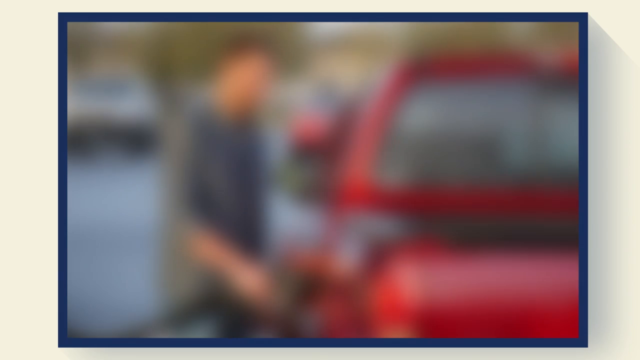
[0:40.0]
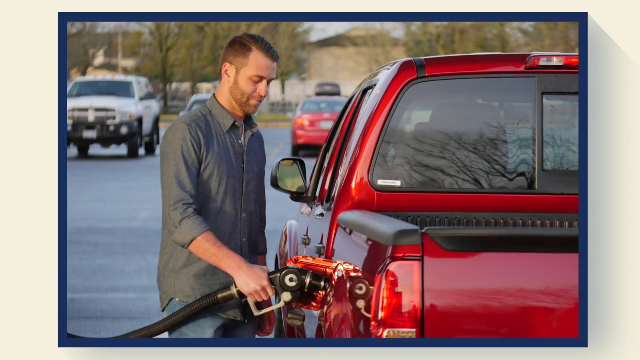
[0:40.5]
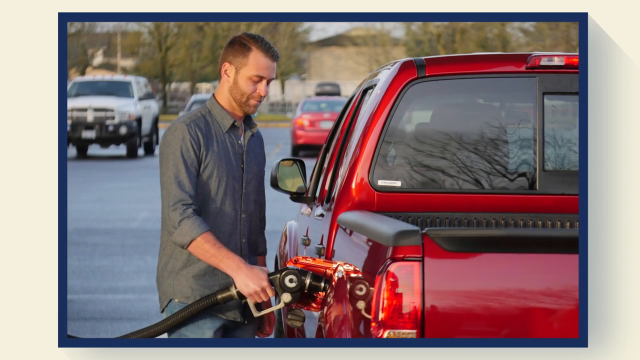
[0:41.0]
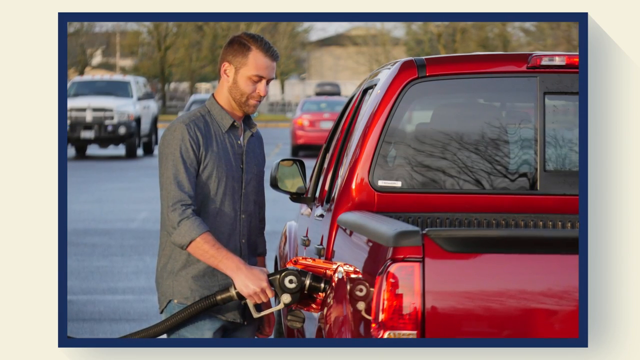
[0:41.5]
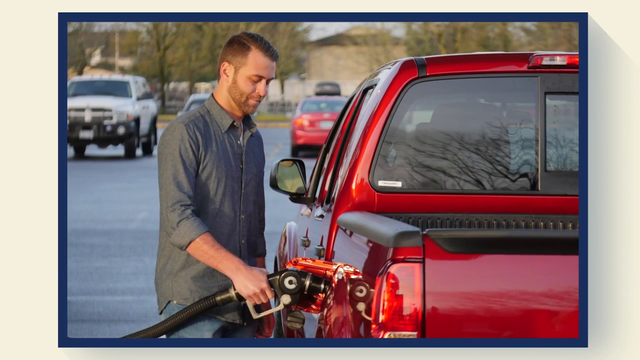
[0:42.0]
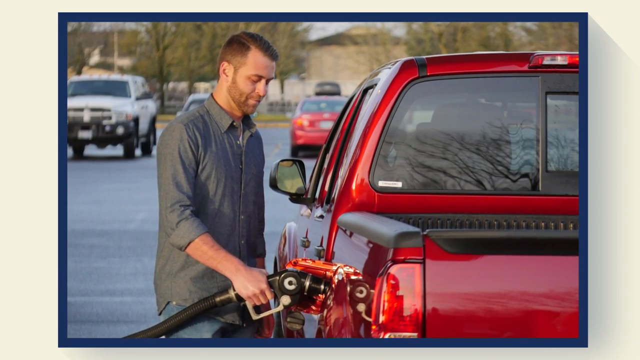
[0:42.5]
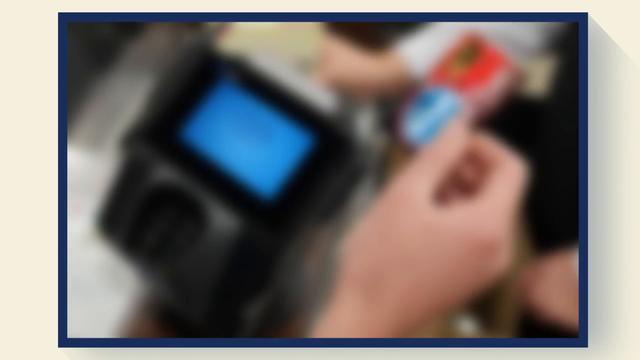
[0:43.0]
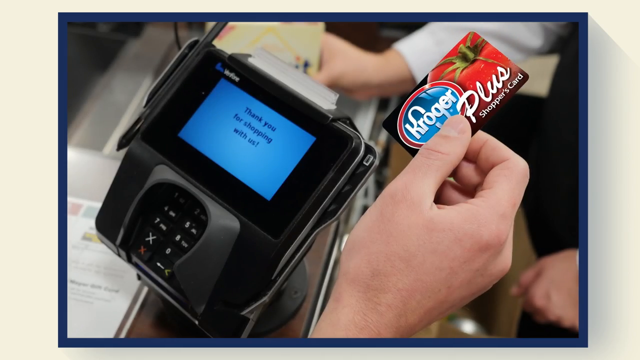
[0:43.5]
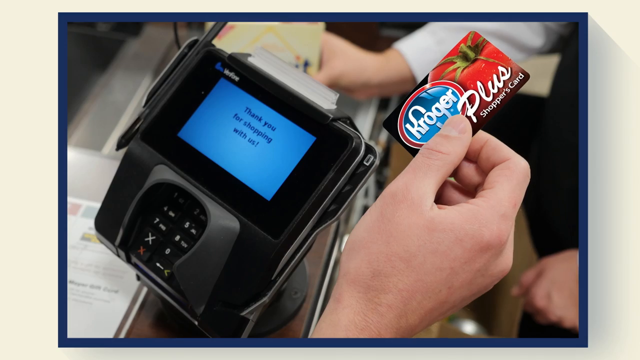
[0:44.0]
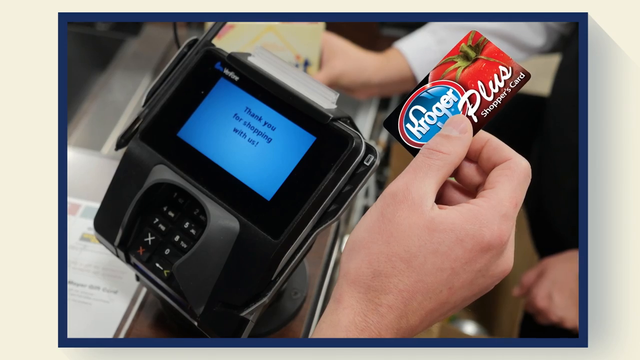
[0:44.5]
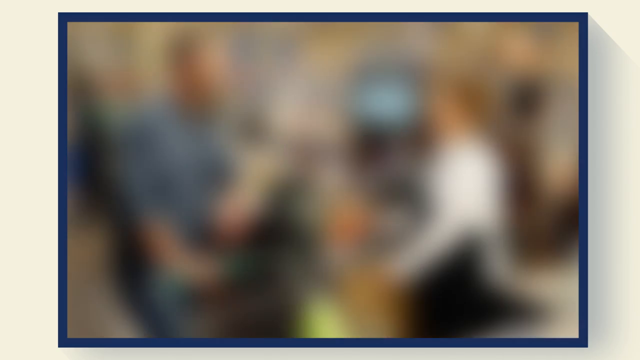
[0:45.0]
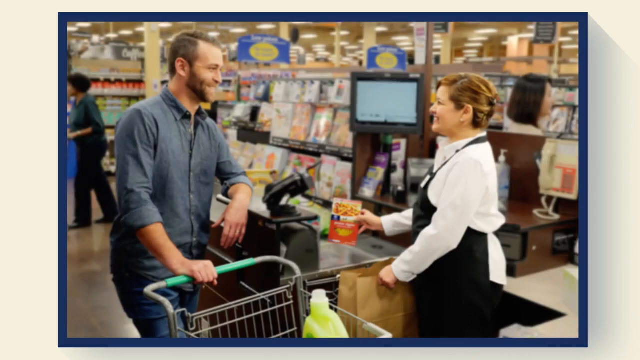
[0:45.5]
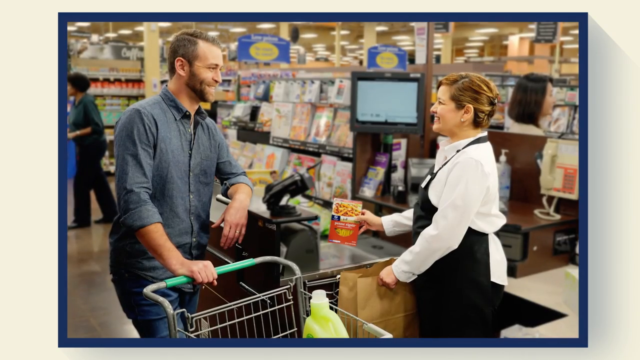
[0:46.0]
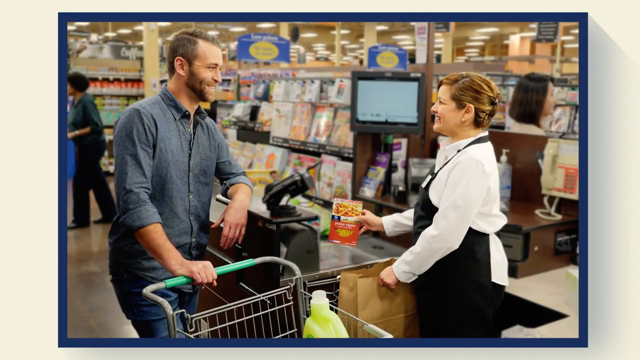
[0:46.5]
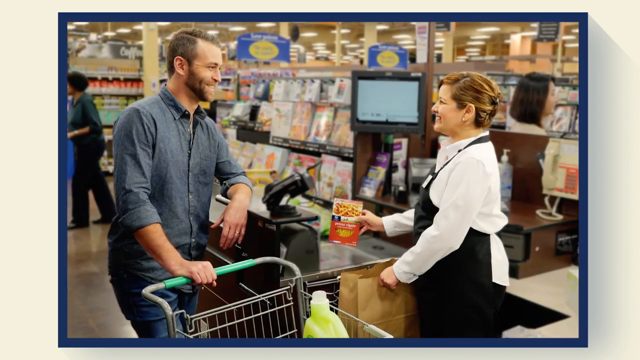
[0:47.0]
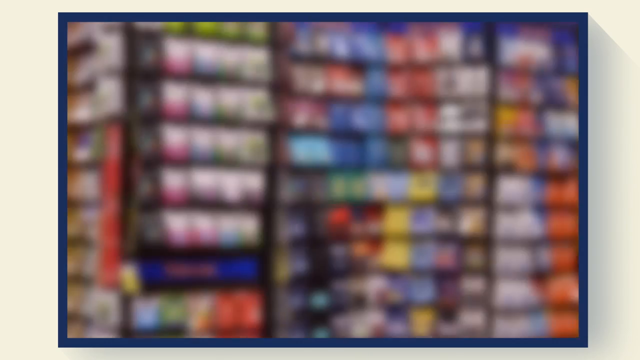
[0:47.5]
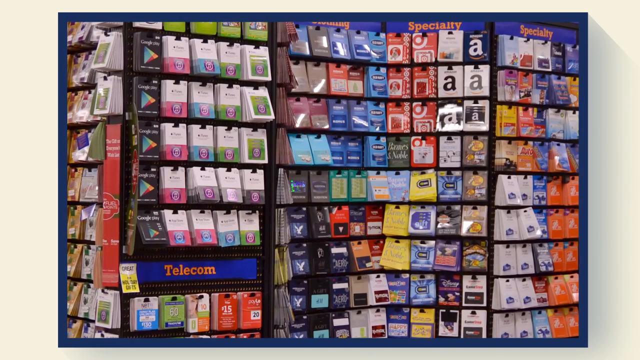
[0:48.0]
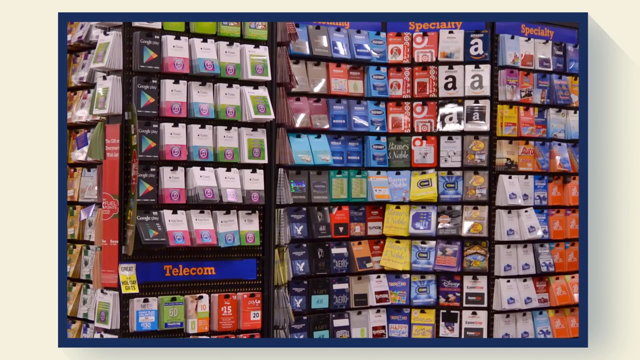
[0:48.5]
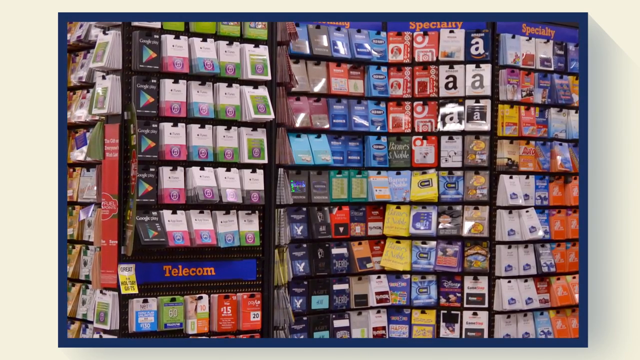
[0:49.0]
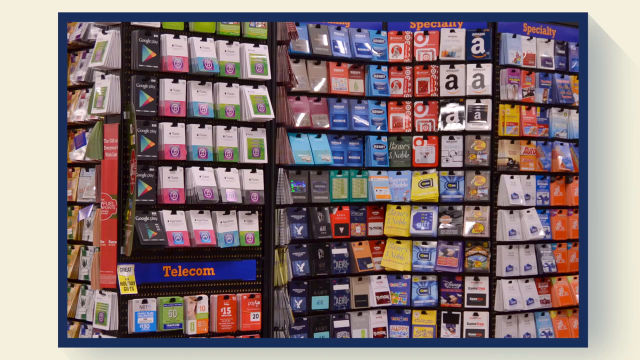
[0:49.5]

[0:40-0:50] The video shows points being collected by shopping at Kroger as a Kroger Plus member, with the points rewarded toward fuel for a car. A Kroger Plus card is scanned at a checkout in the supermarket, and the rewards available for the points are shown, including various gift cards from major companies such as Amazon and Apple.